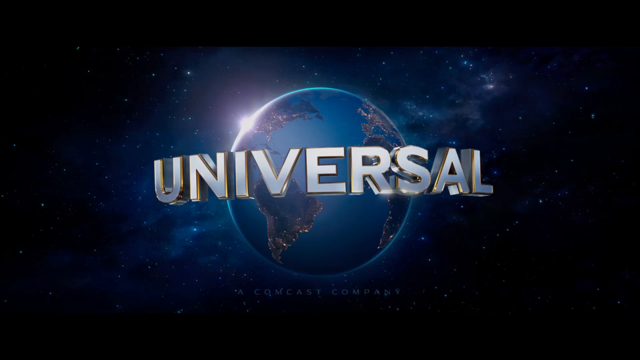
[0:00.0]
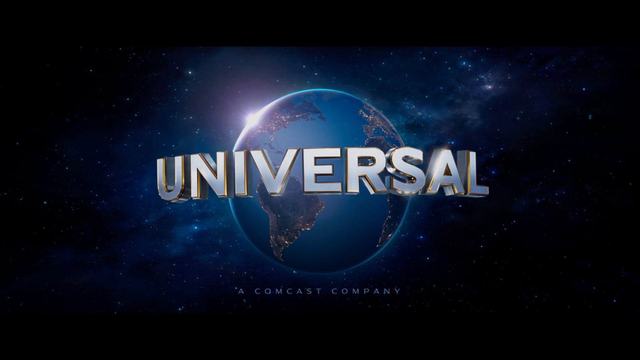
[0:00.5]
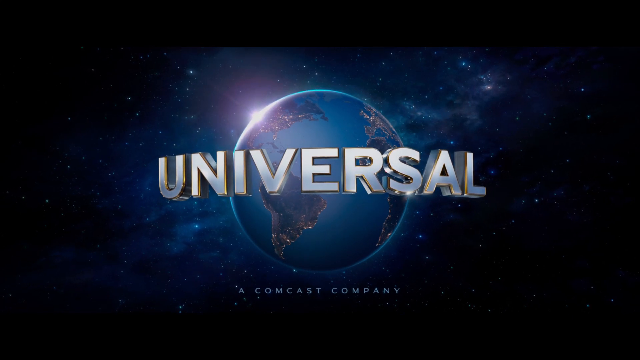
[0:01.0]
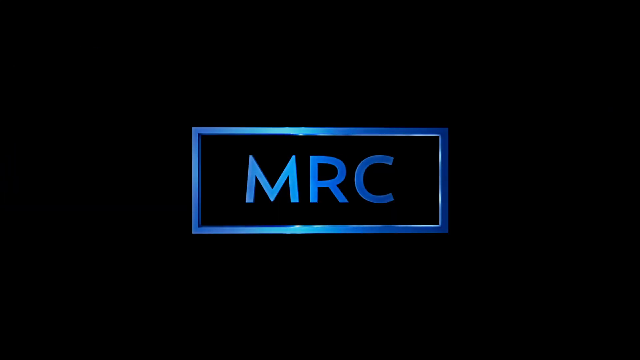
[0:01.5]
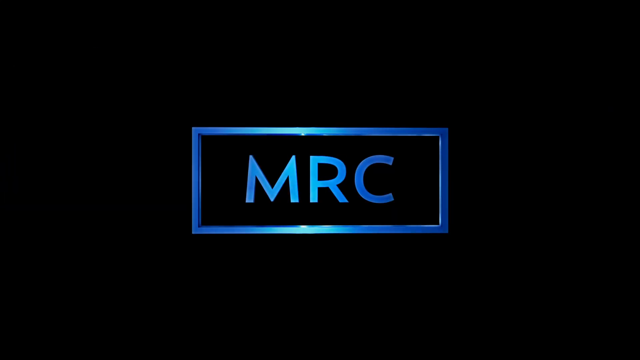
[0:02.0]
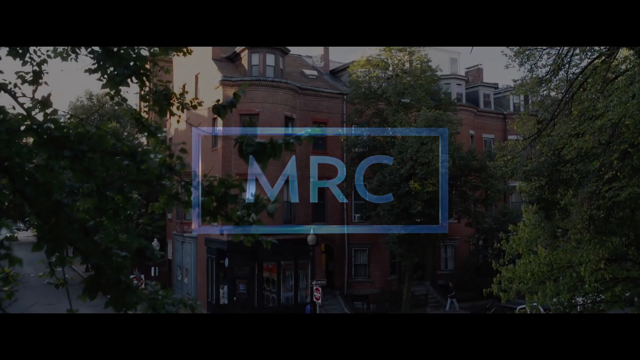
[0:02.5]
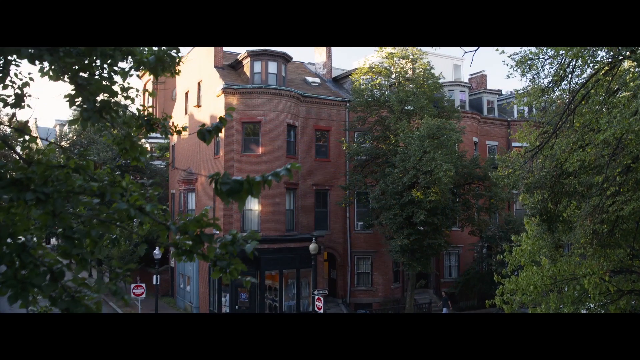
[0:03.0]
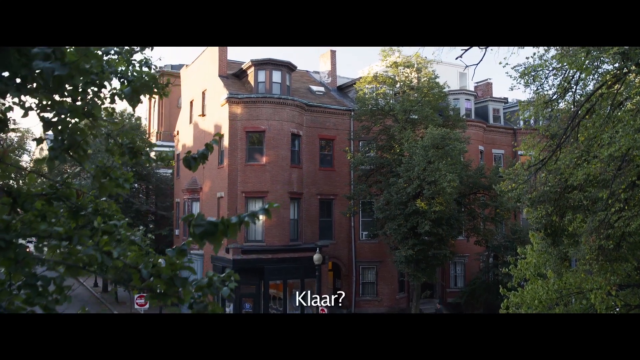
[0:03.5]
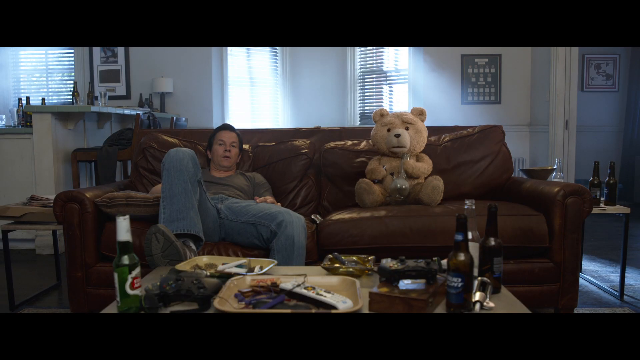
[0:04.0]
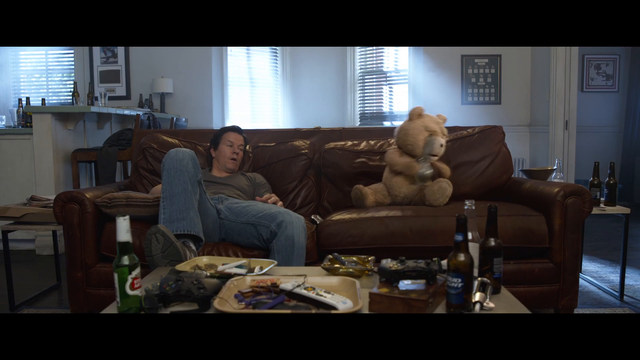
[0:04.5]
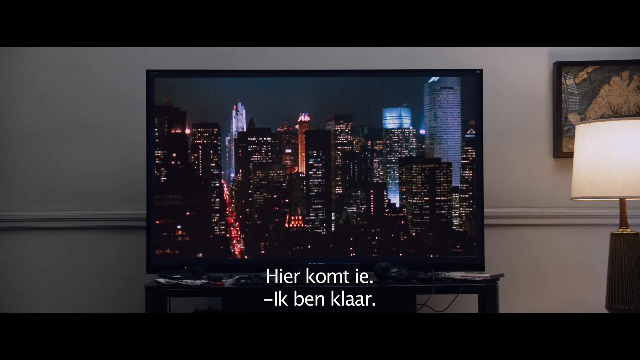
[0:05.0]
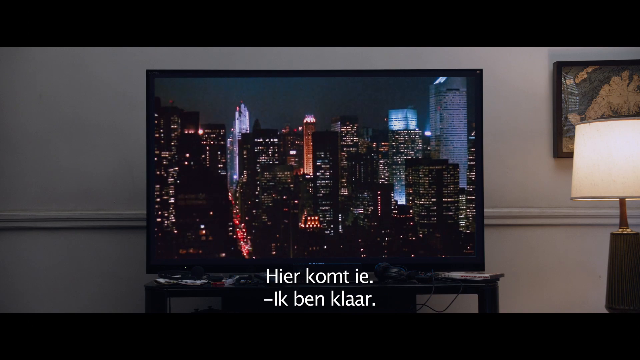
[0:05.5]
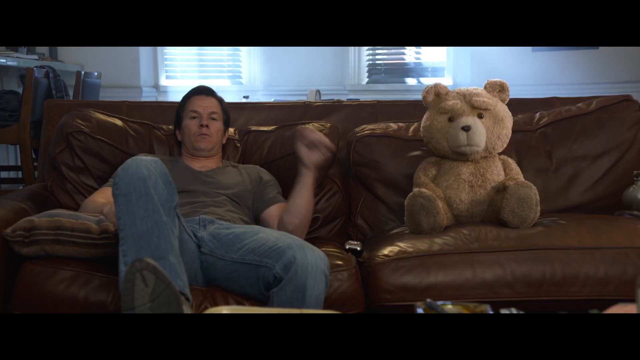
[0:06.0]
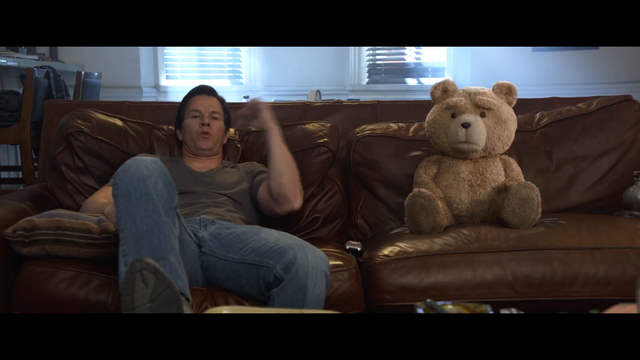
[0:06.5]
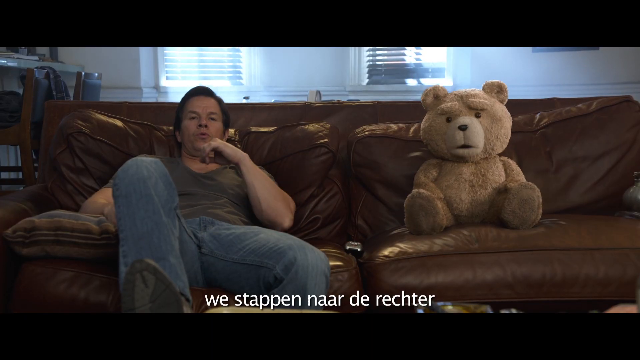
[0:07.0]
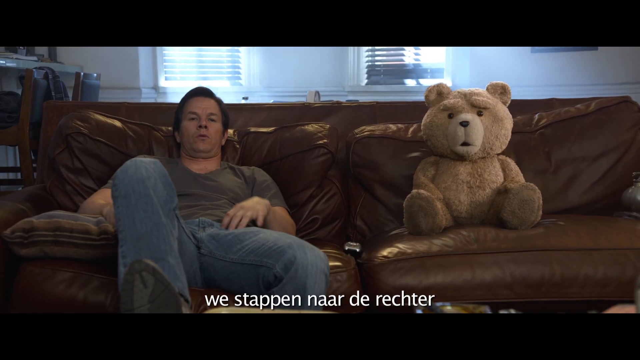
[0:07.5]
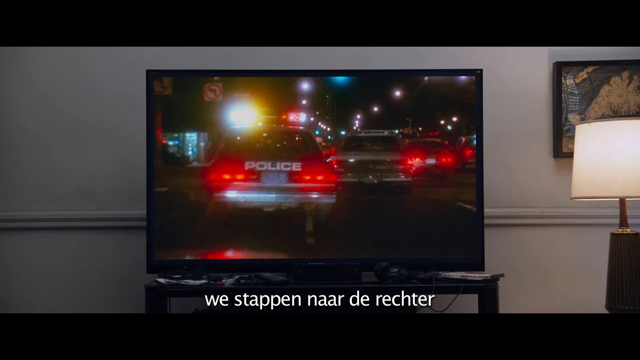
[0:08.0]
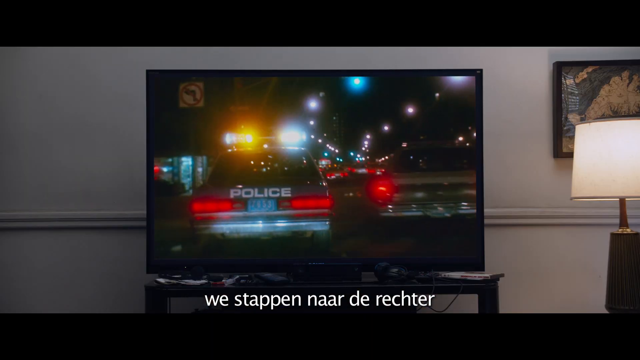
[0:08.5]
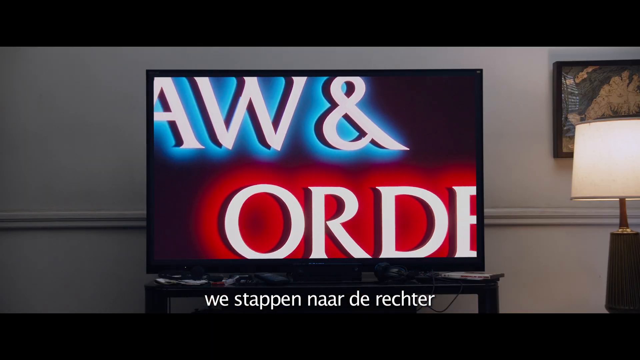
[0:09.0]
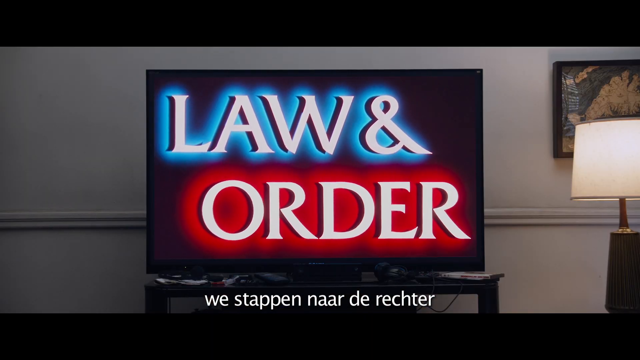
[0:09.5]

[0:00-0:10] The video opens with a Universal Studios logo: a glowing globe of the world seen with outer space surrounding it, and "Universal" in white capitals that look somewhat silver or steel. It switches to another logo on a black background, a blue, illuminated rectangle with "MRC" in capital sans serif letters in the middle. Next comes an elevated view of a brownstone-like New York City red brick building with leafy trees around it. Indoors, Mark Wahlberg is on the left of a leather couch and a large stuffed bear is on the right. The bear is moving, and the two talk to each other in a somewhat dirty apartment setting. White subtitles, apparently in German, appear at the bottom as they talk.